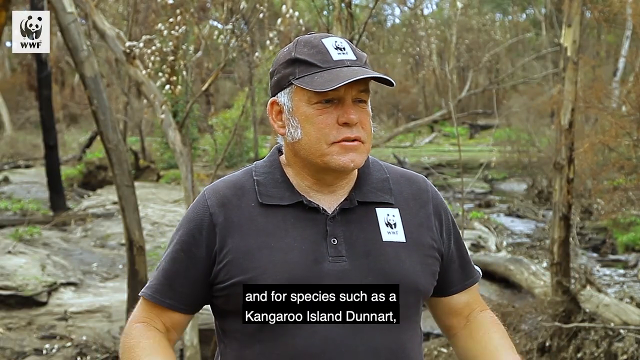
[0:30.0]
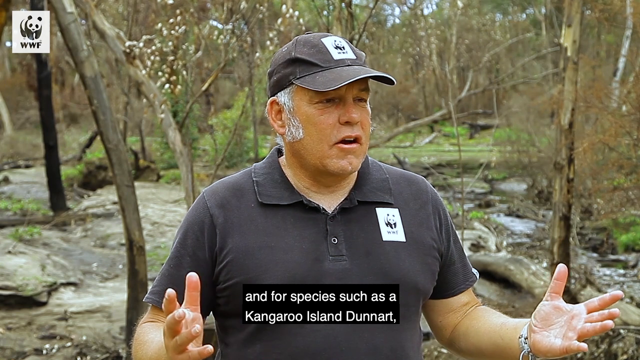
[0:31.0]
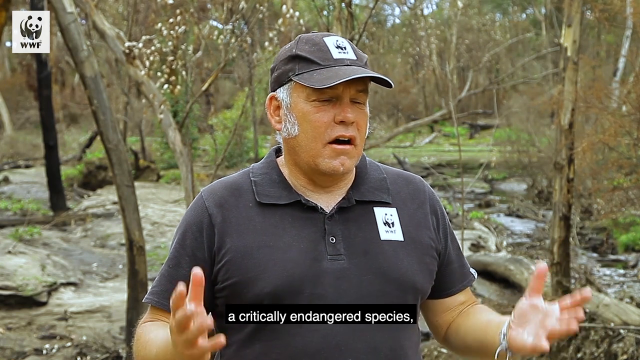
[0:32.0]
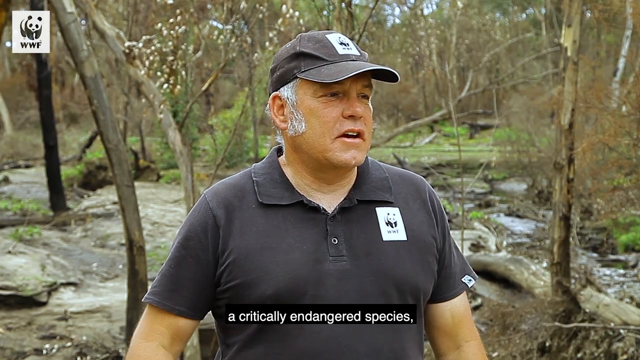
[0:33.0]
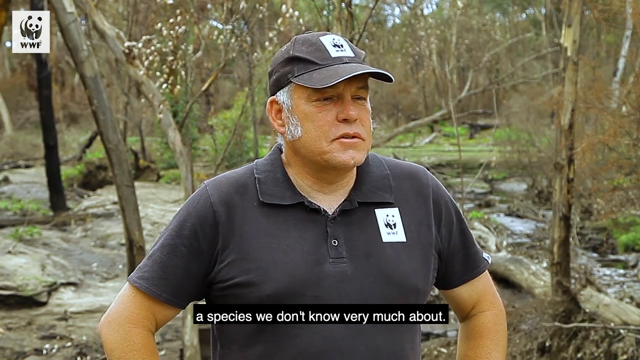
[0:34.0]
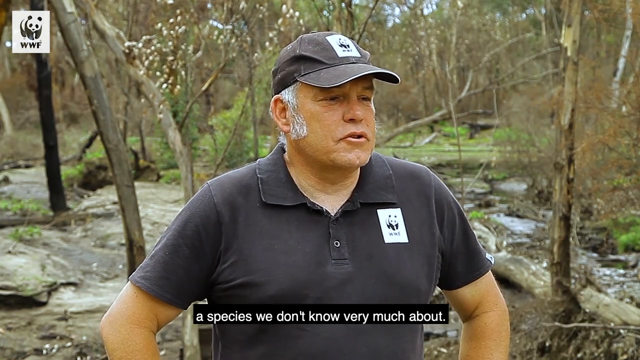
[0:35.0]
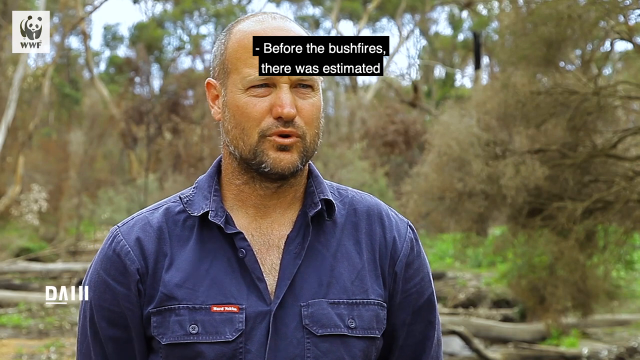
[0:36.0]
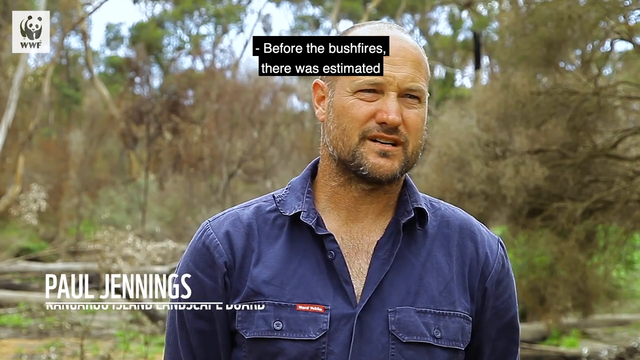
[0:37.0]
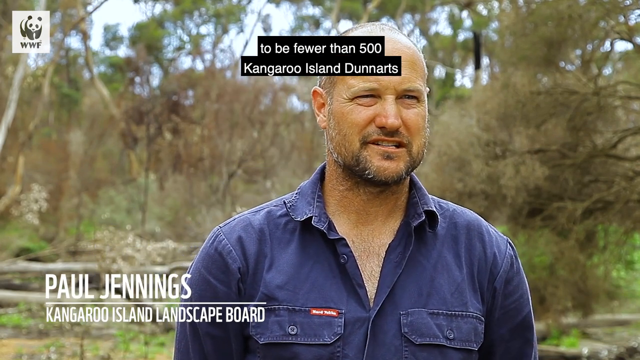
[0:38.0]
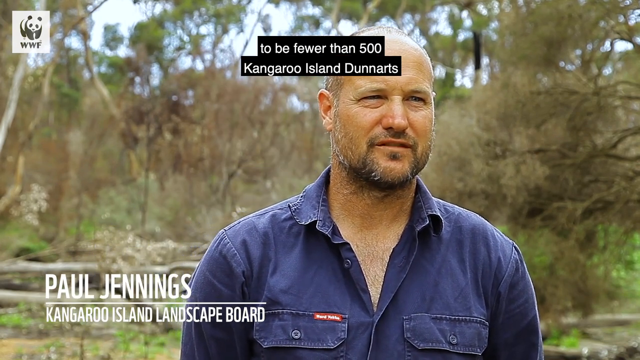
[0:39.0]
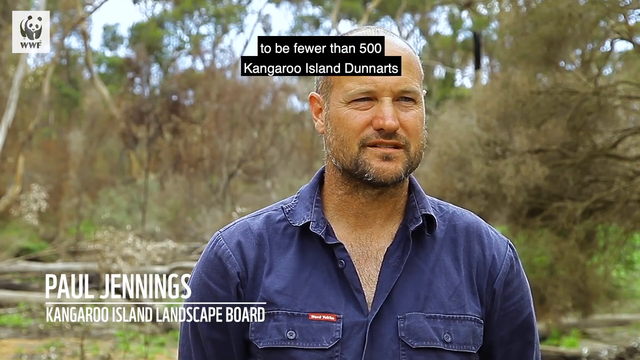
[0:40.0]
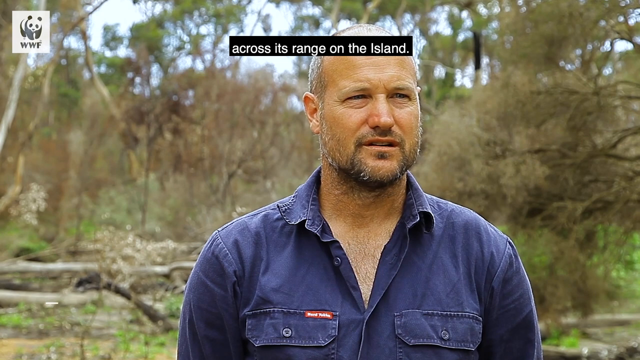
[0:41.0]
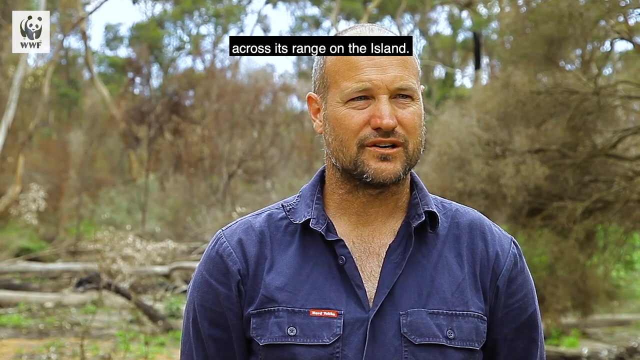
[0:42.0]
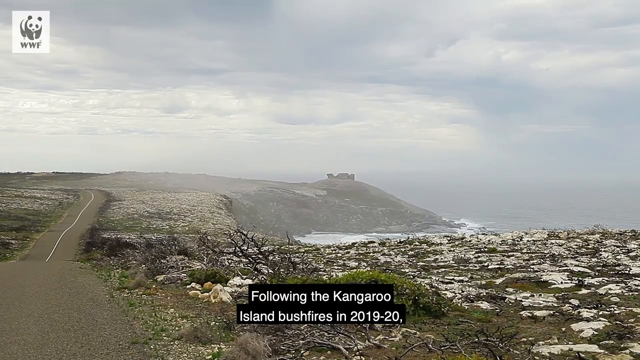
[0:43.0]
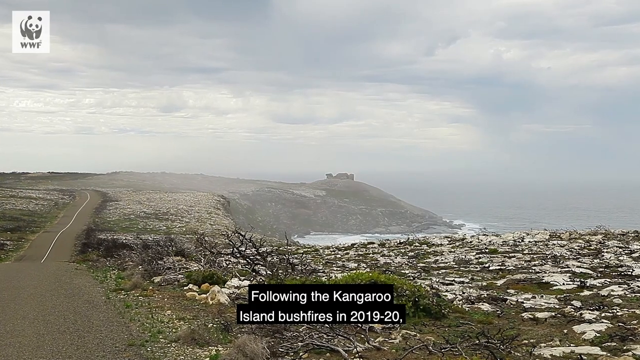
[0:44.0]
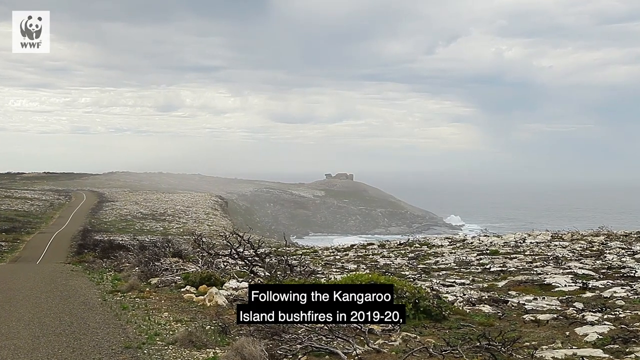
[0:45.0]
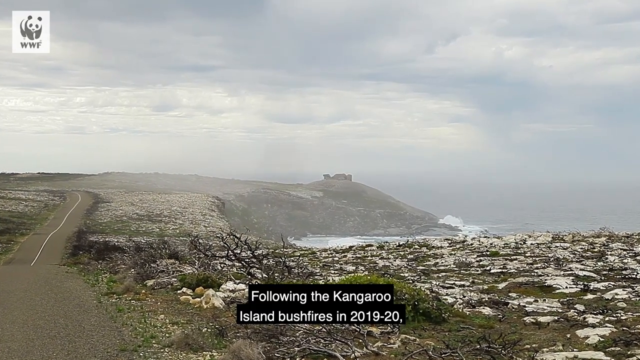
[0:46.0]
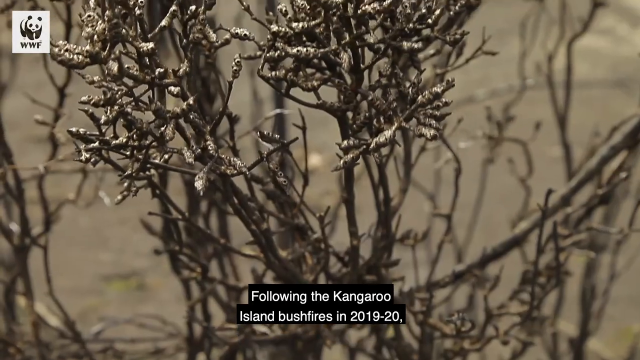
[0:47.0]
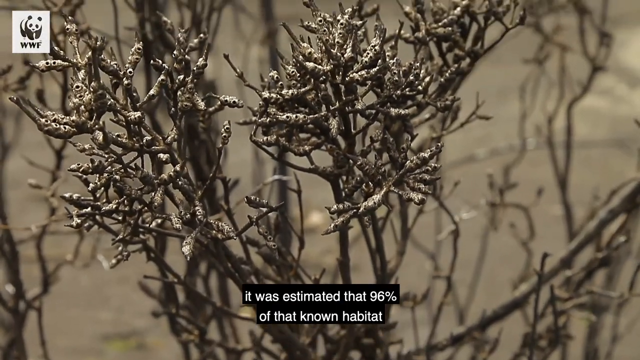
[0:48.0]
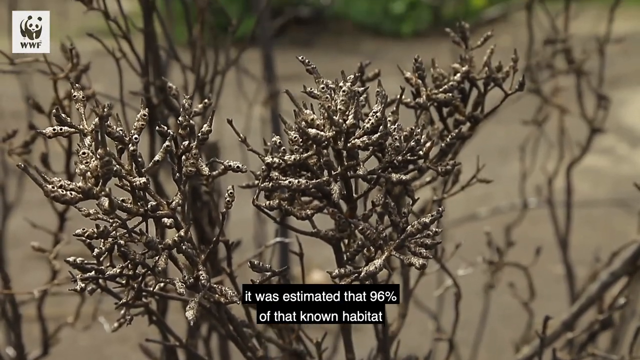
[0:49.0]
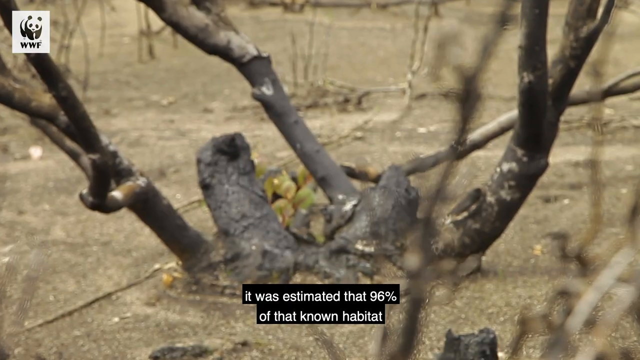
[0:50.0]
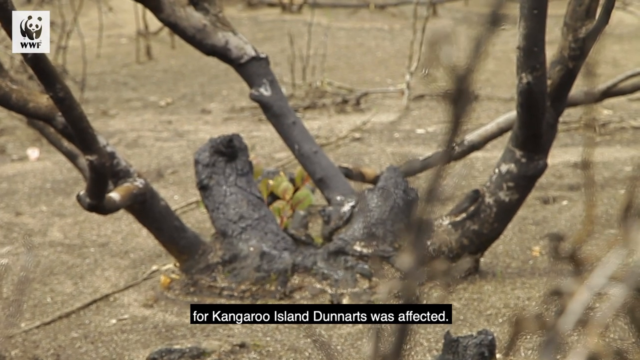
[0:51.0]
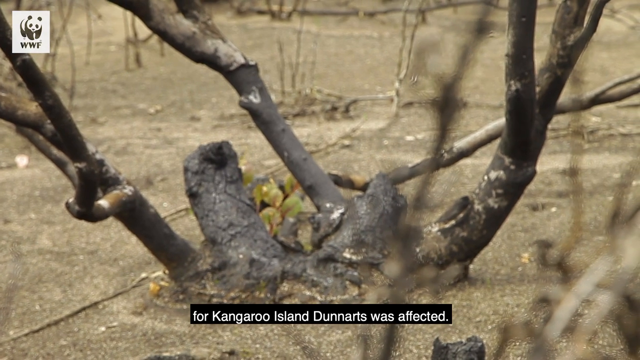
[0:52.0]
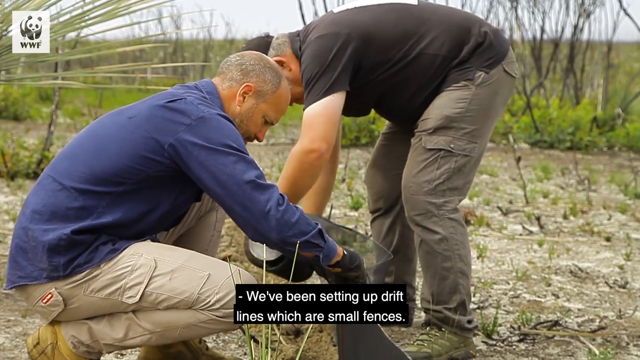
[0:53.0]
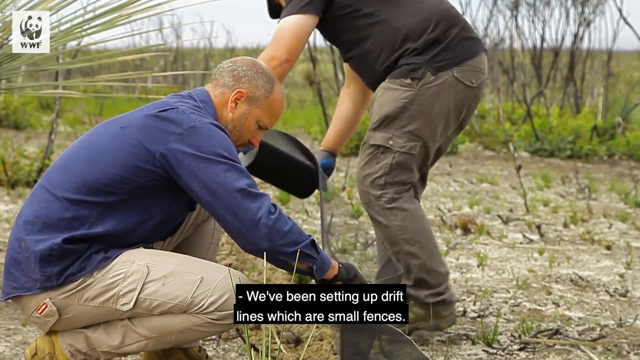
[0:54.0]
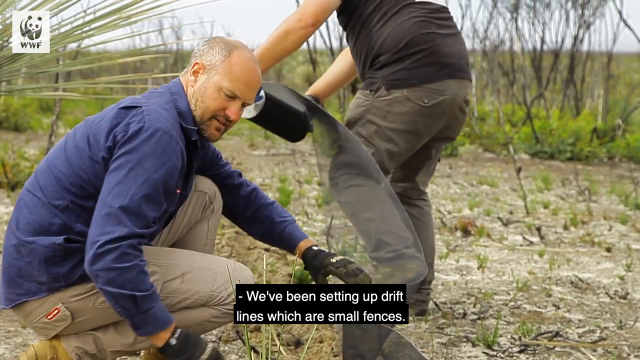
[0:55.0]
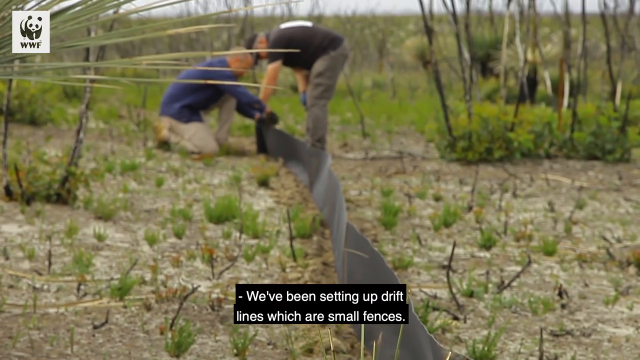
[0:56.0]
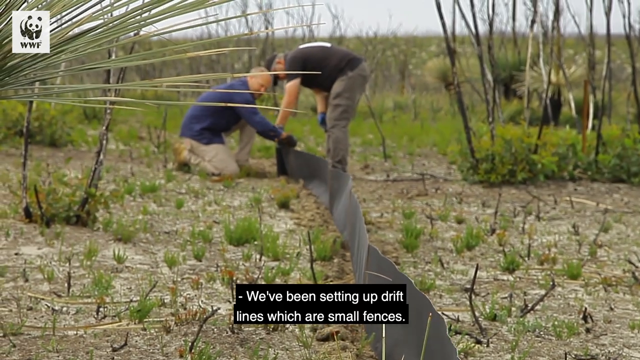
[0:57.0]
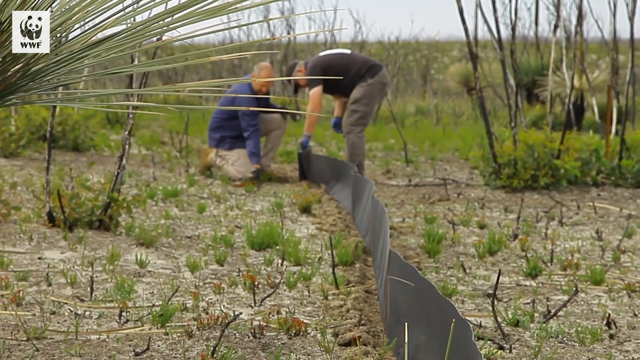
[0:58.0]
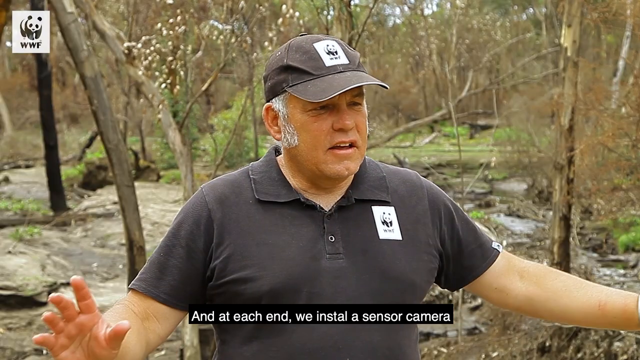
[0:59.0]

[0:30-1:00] The man holds both hands in front of him and continues speaking to the camera, squinting slightly. Graying hair is visible from underneath his baseball cap, and he has long sideburns on the visible right side of his face. The woods behind him appear to have some creeks or puddles on the right side, there is a fallen tree in the background, and the greenery is short and sparse. A cut shows another man, wearing a blue collared shirt, who also looks slightly off to the right as he speaks; he just speaks to the camera without moving. Next comes a foggy hill in the distance along a coast, with the coastline in the center, the water off to the right, and a road on the left leading up the hill in the background. It is a very overcast day. A cut shows what appears to be twigs up close and gnarled branches on a dirt ground. The two men appear next: the one in the blue shirt on the left is crouching down, and the one on the right in the black shirt is bending over; they appear to be setting up equipment. Another cut shows them setting up something long and black.